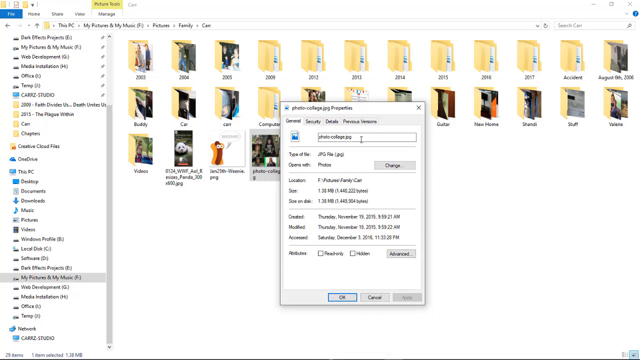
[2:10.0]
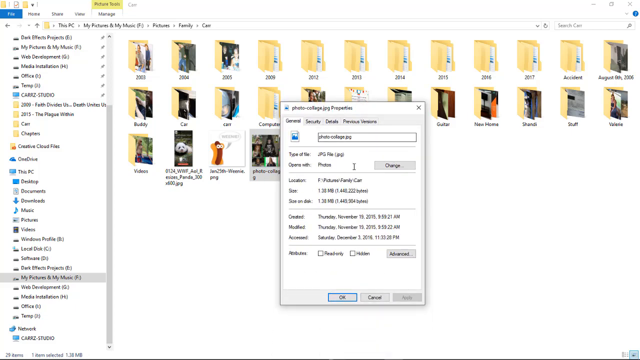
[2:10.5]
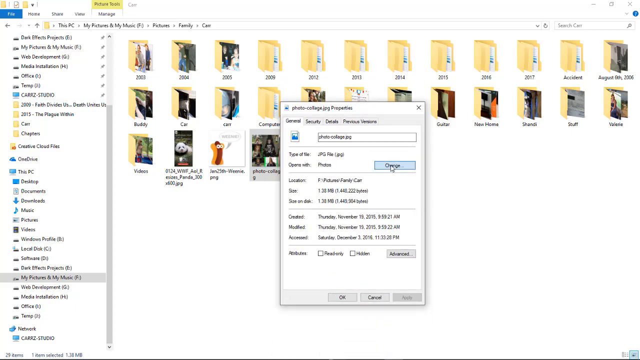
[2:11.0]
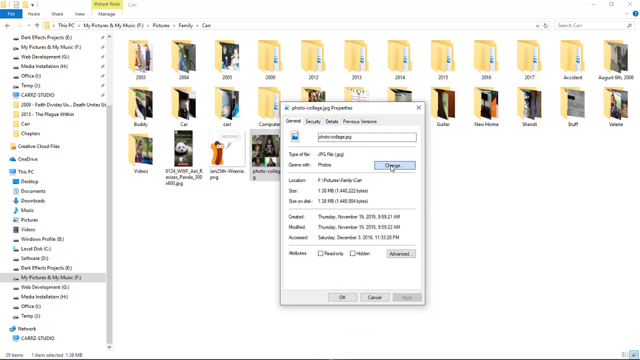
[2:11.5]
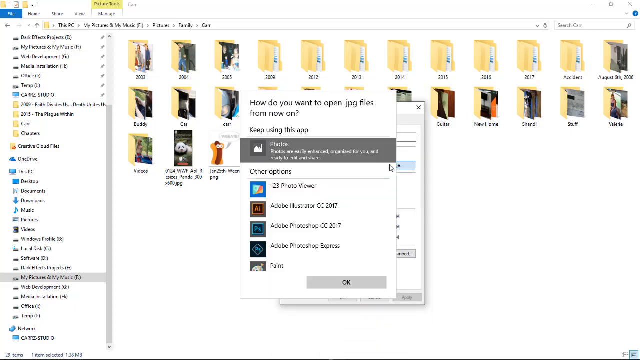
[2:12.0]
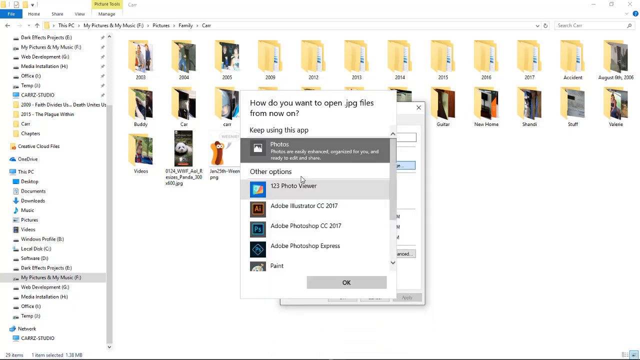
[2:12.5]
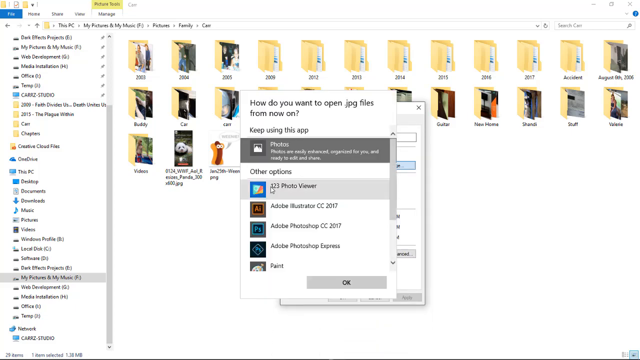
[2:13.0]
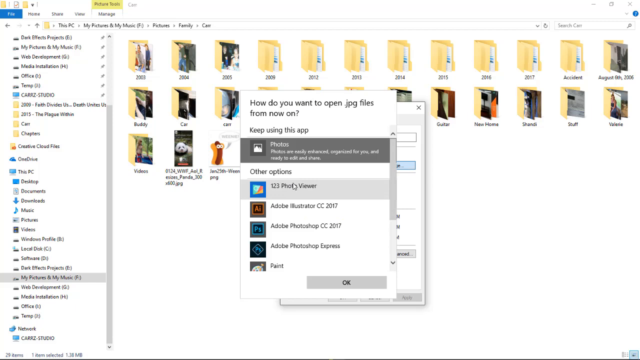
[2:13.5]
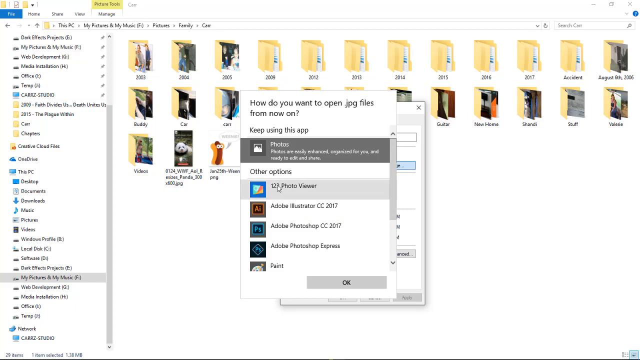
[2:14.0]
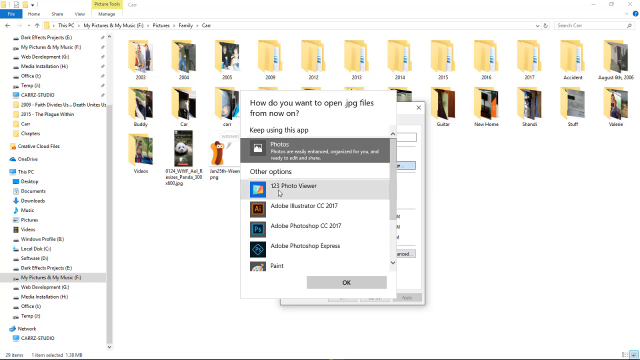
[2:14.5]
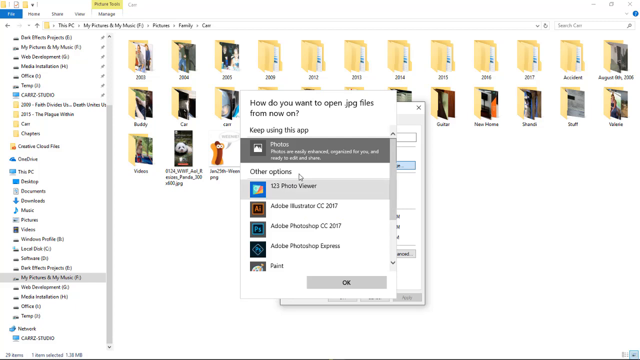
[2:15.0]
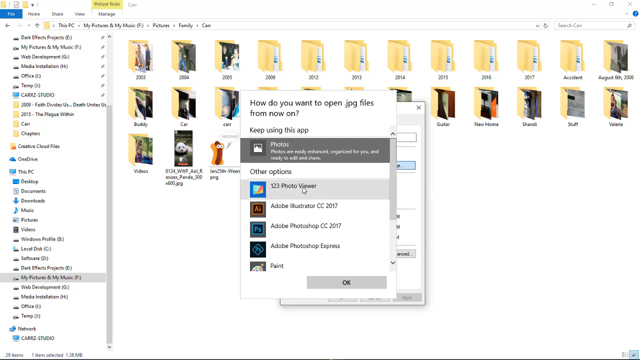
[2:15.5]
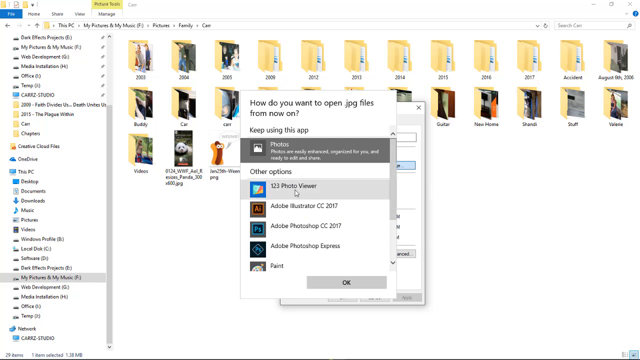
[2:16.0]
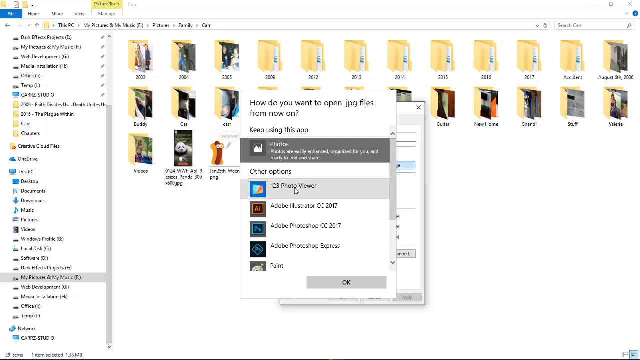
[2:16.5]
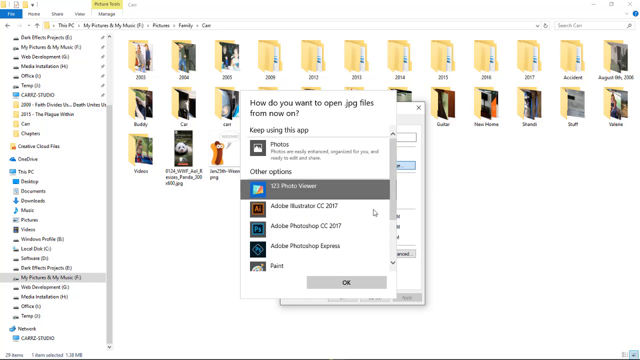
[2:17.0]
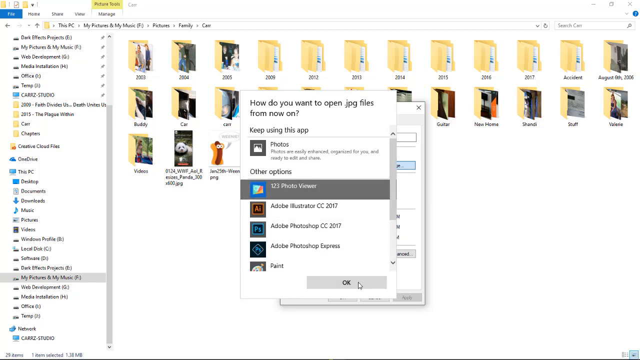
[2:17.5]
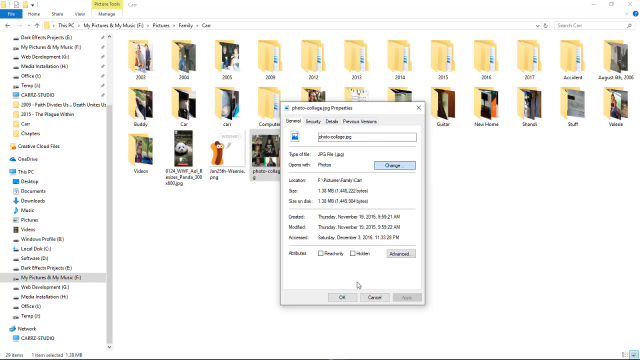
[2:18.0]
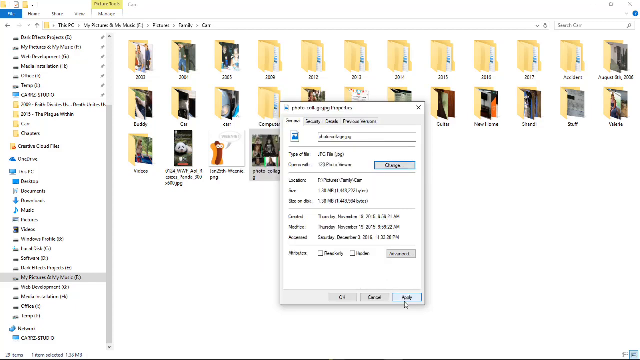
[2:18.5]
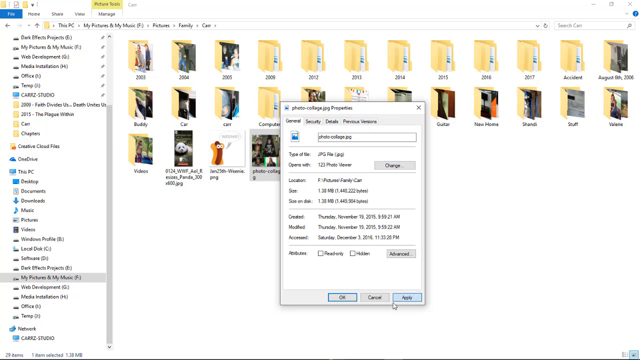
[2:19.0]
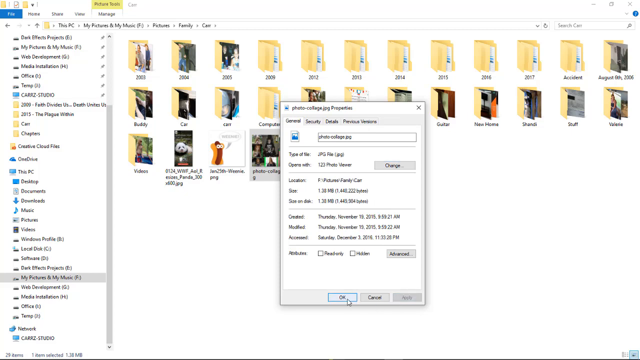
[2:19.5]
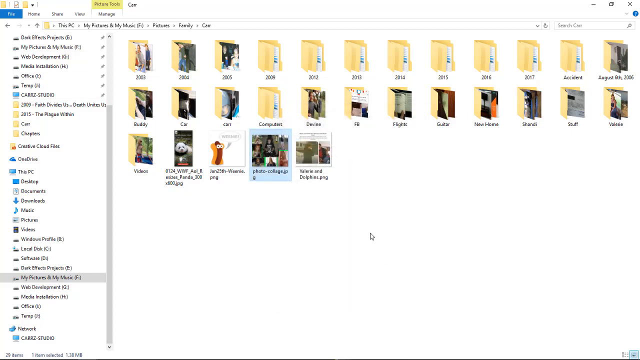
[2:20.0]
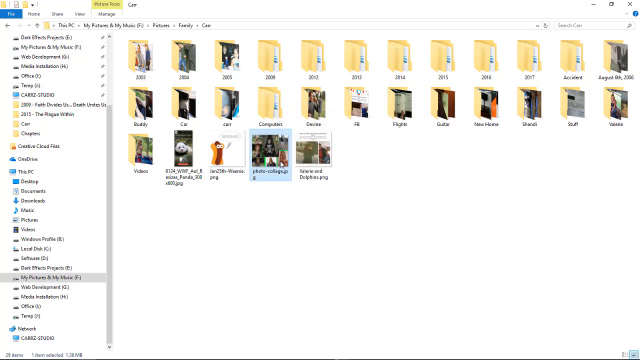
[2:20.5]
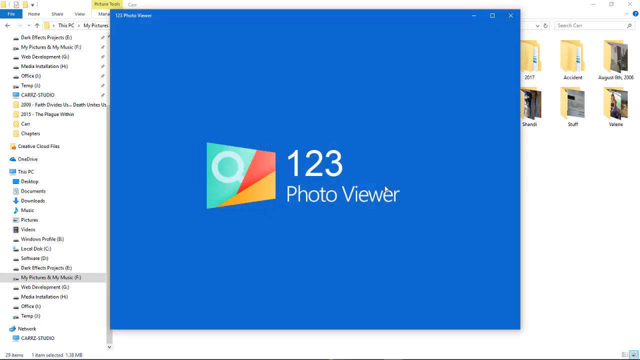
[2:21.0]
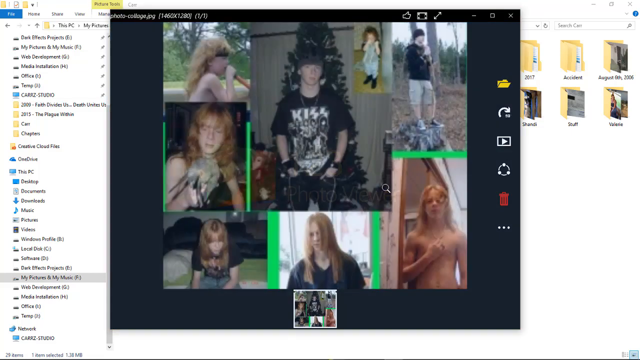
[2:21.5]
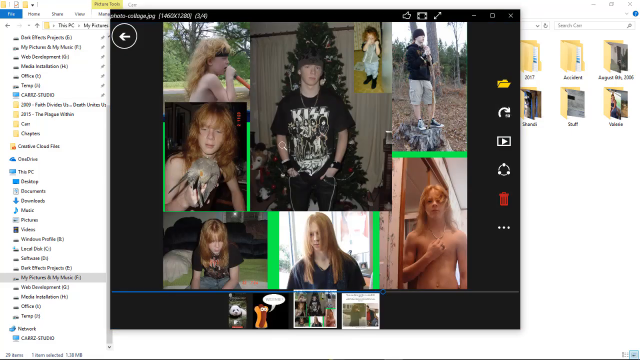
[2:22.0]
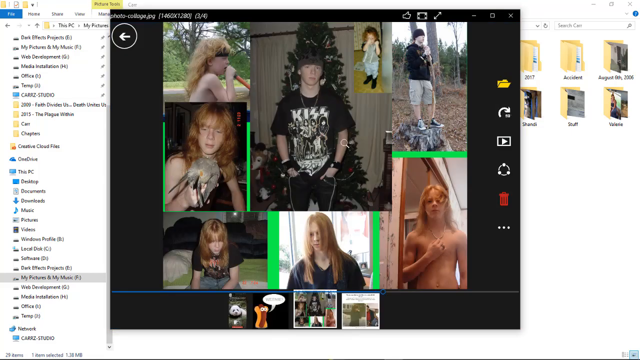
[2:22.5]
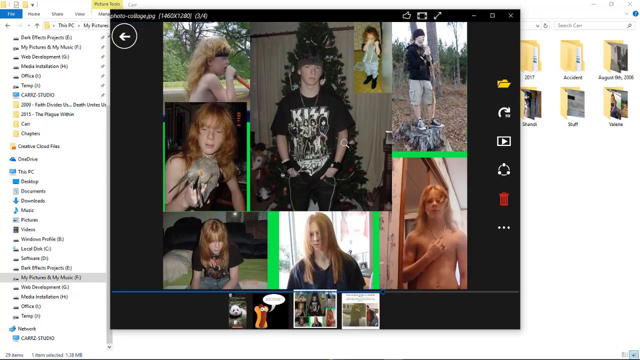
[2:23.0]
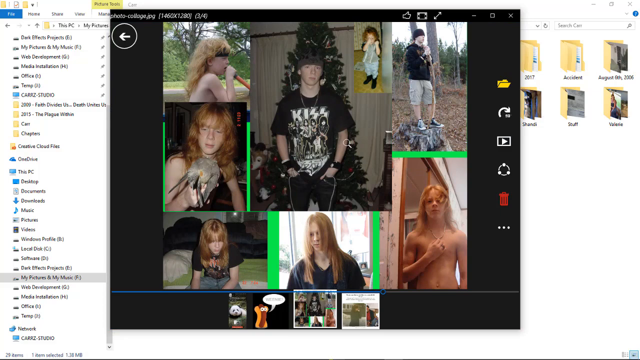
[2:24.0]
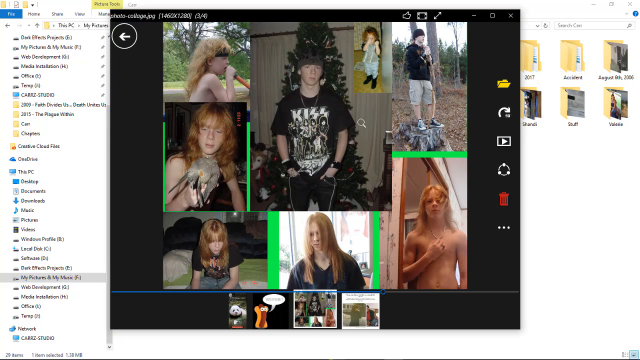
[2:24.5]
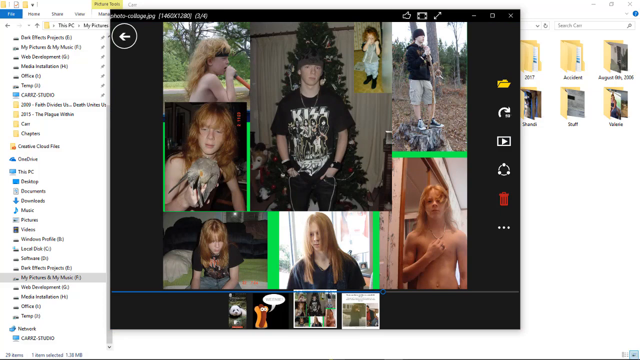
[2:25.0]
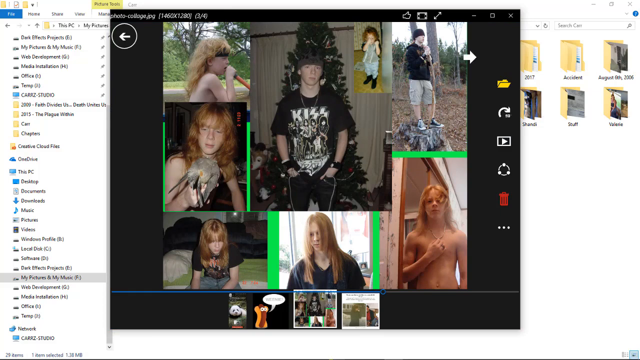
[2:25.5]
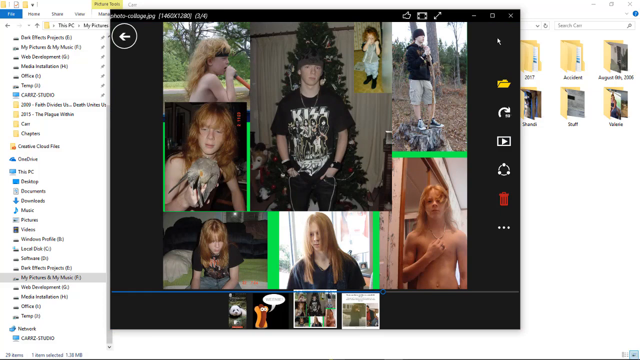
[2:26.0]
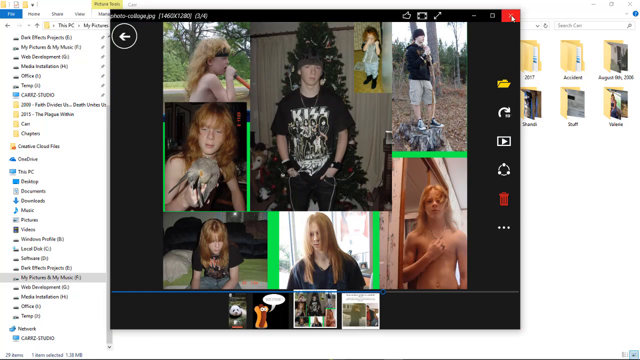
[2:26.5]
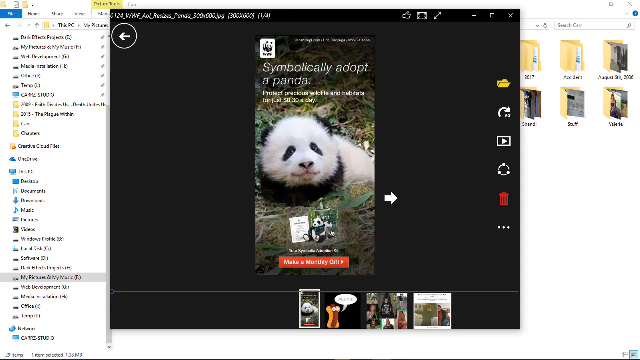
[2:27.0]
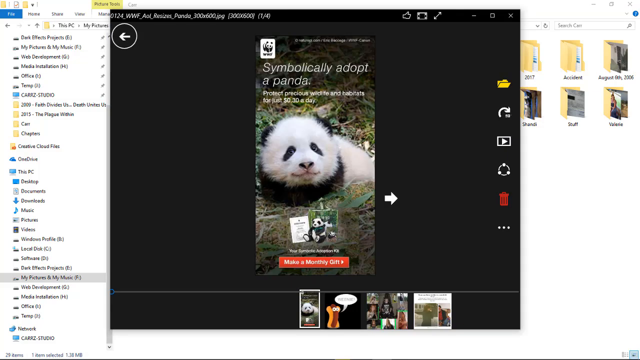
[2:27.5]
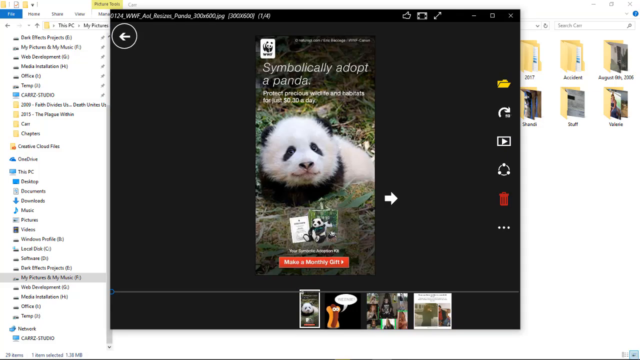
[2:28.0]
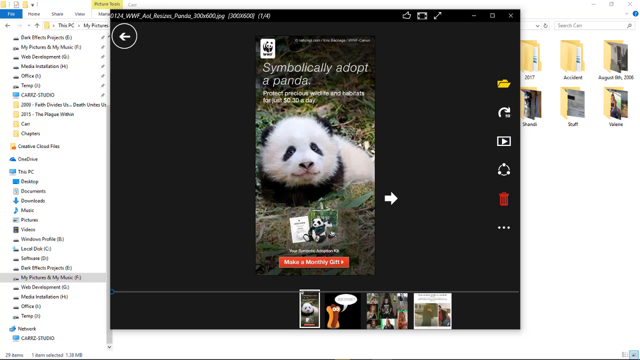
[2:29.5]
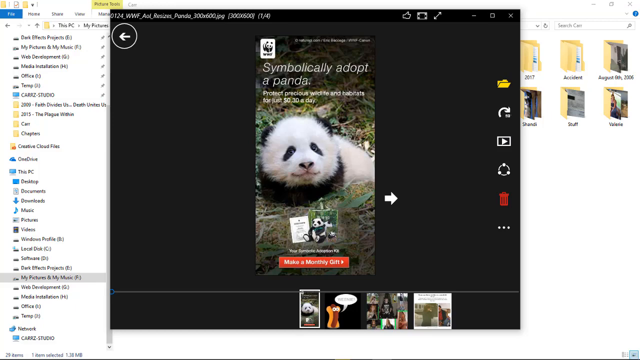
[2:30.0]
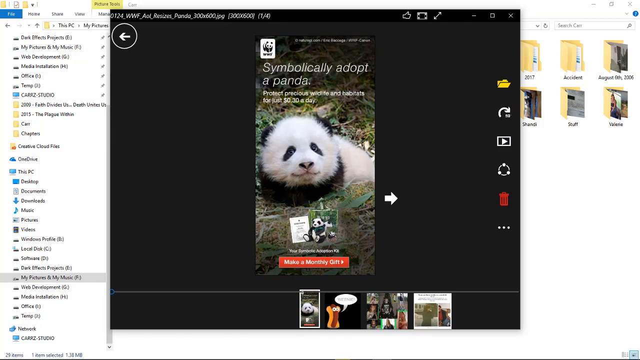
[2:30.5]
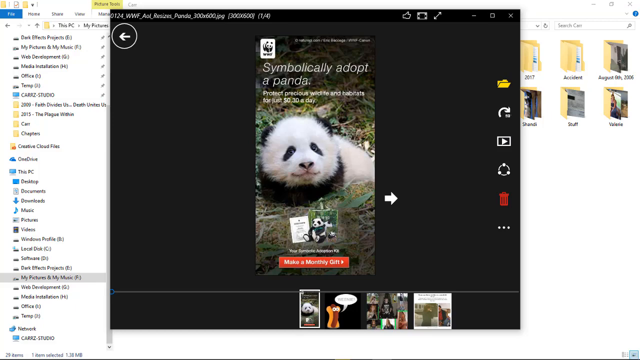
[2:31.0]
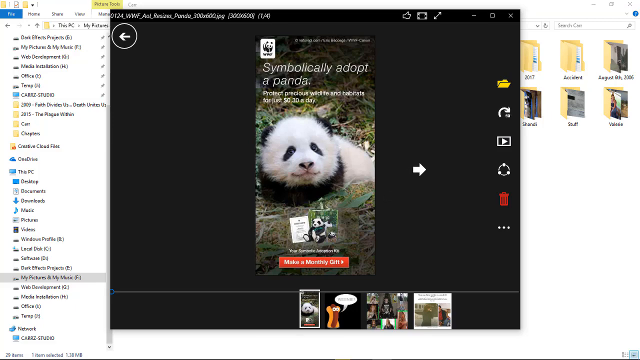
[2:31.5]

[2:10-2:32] A person's computer shows a whole bunch of folder icons, and a menu seems to pop up in front of them. The user looks like they are pressing a button, and another menu pops up with a logo that they put their cursor over, and it says "1, 2, 3 photo viewer". They seem to be hovering over it, and it is highlighted in gray. They click on a couple of buttons and click okay, and the app opens in the forefront, saying "1, 2, 3 photo viewer" in white text, with the logo on the left that looks like a card with blue, red and yellow colors. The view cuts to a window with a whole bunch of pictures that looks like a collage of a person, with the middle picture showing the person wearing a KISS t-shirt. They exit out, and another window shows a panda with white text above the panda's head.